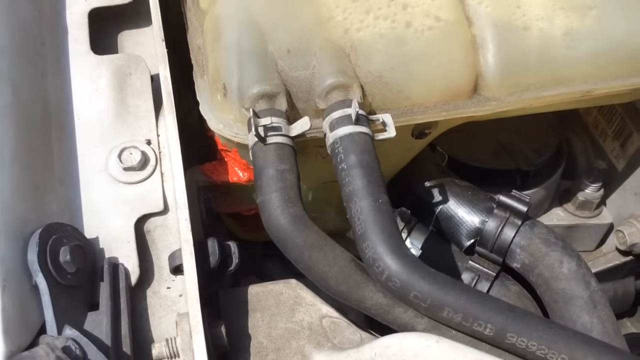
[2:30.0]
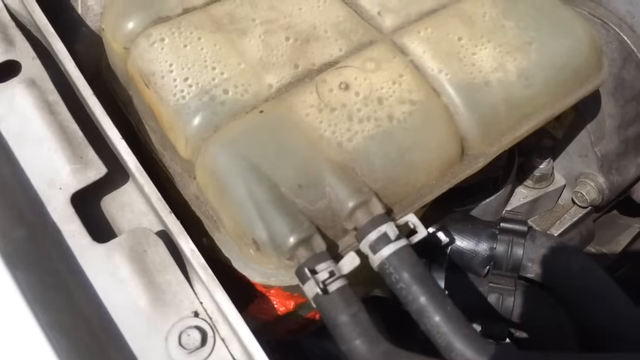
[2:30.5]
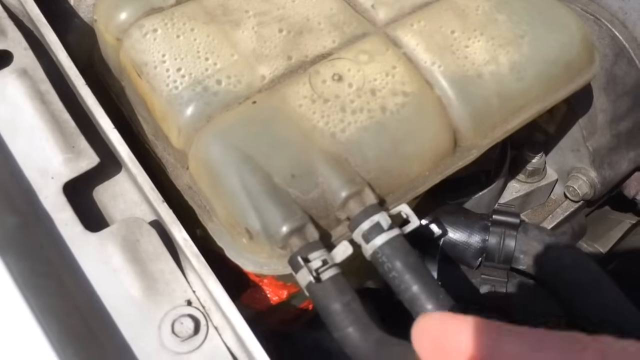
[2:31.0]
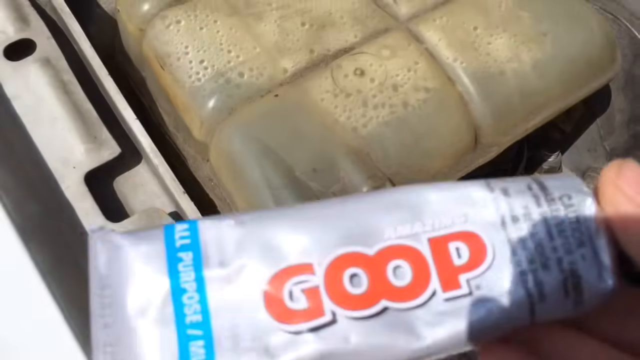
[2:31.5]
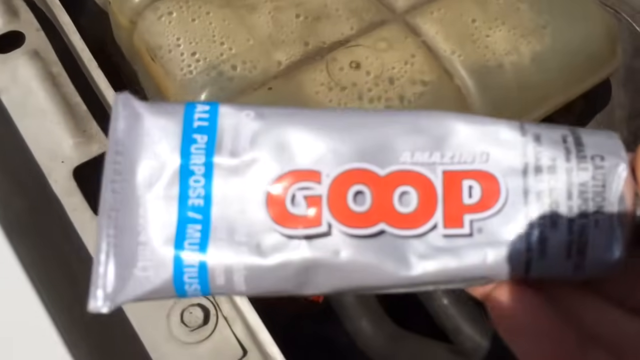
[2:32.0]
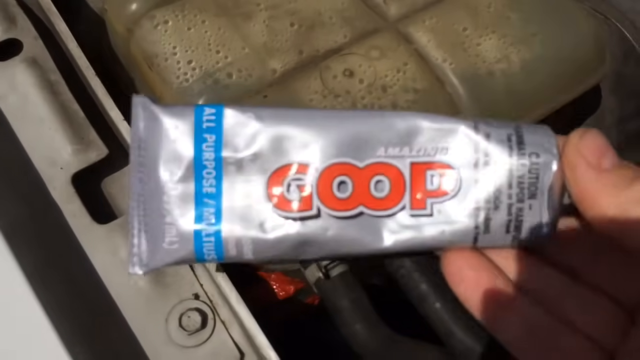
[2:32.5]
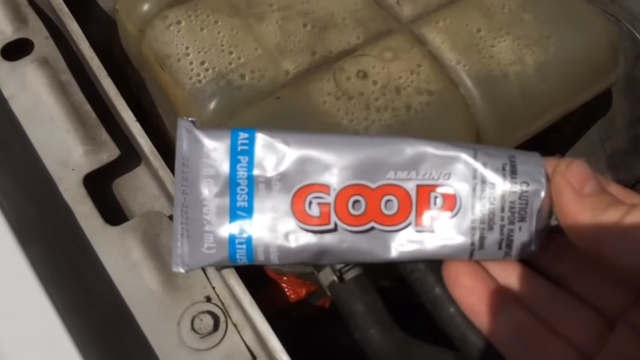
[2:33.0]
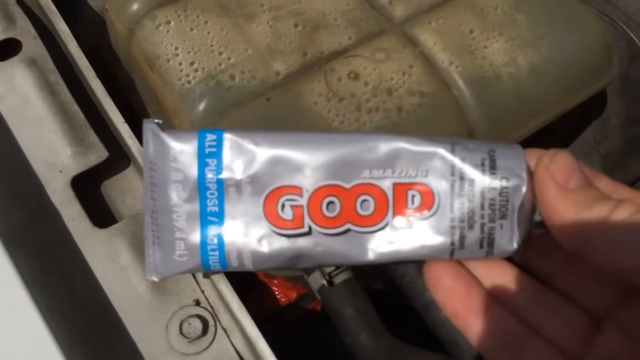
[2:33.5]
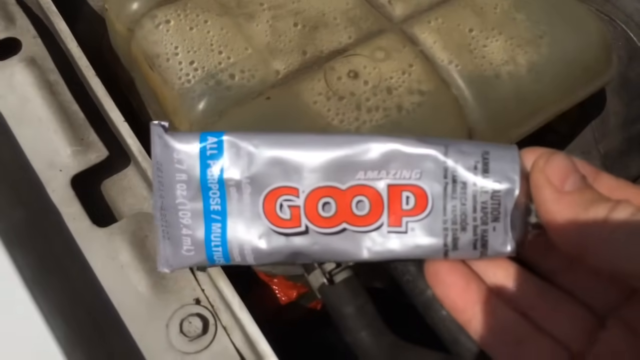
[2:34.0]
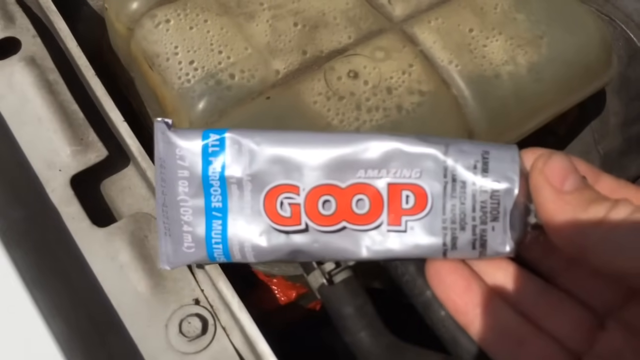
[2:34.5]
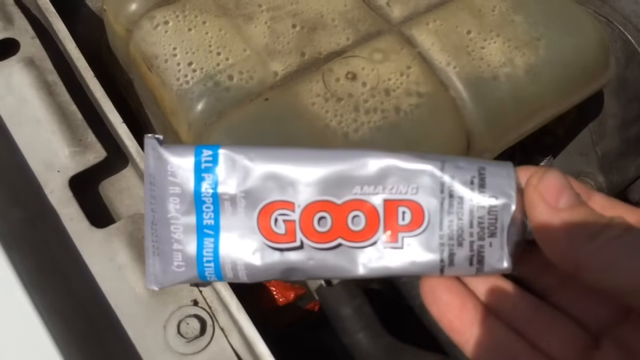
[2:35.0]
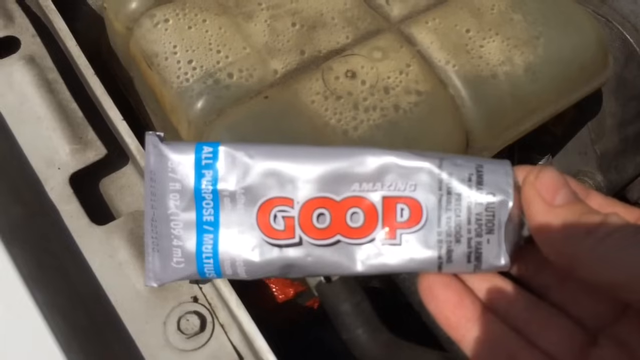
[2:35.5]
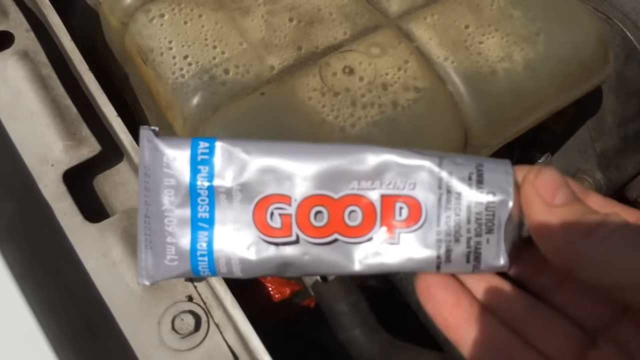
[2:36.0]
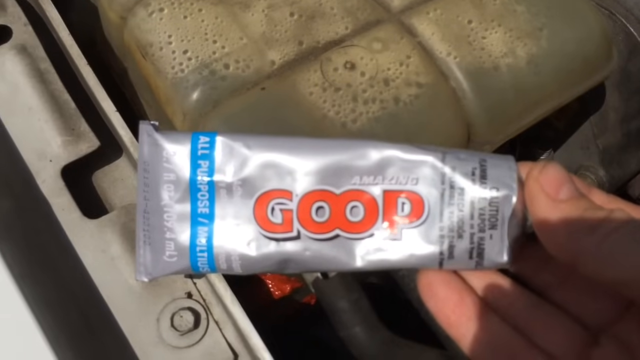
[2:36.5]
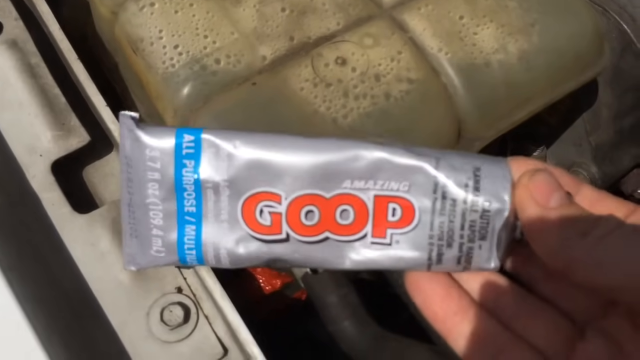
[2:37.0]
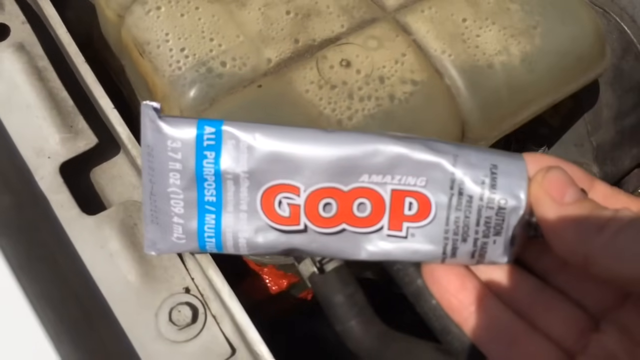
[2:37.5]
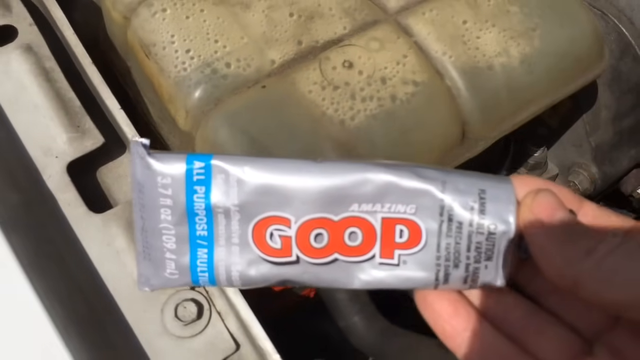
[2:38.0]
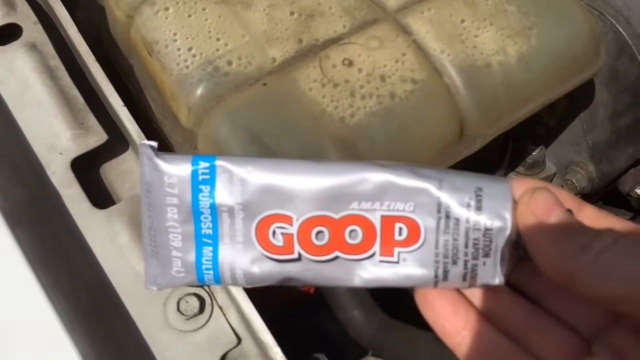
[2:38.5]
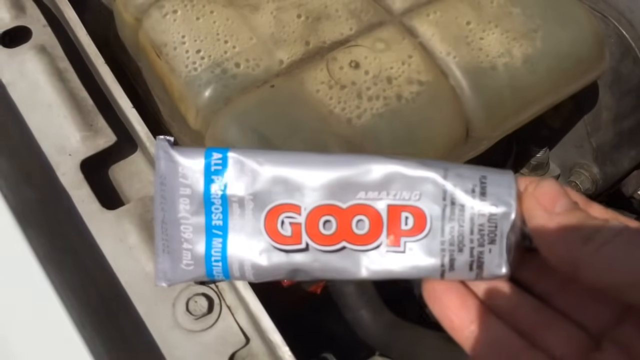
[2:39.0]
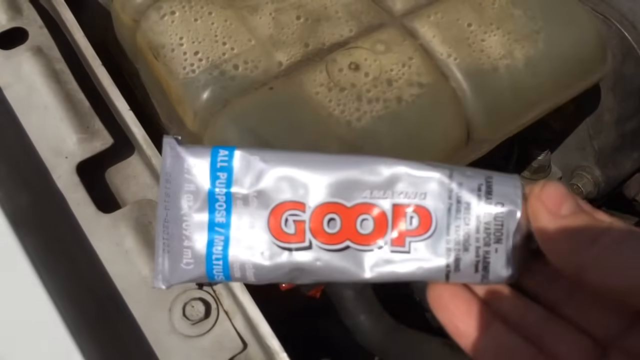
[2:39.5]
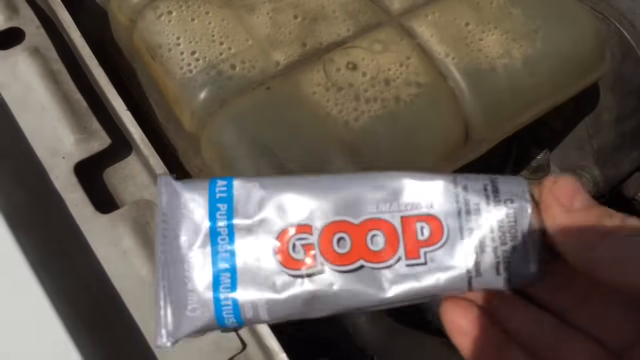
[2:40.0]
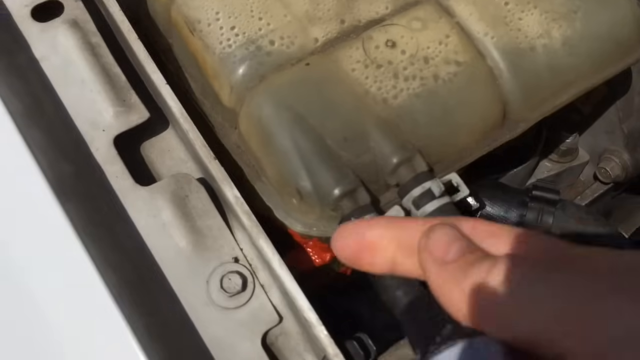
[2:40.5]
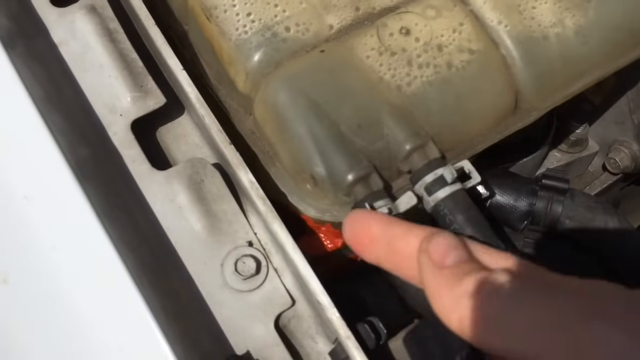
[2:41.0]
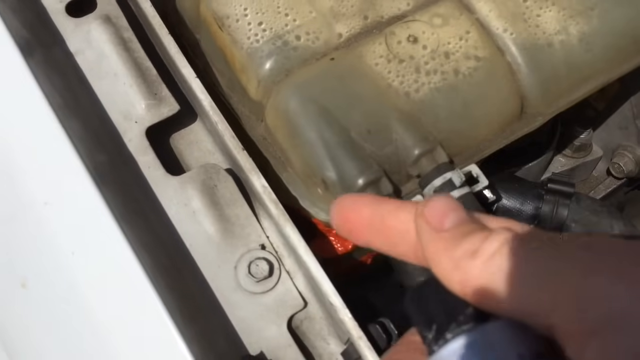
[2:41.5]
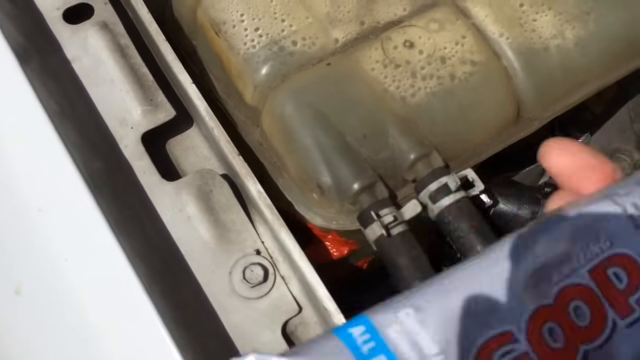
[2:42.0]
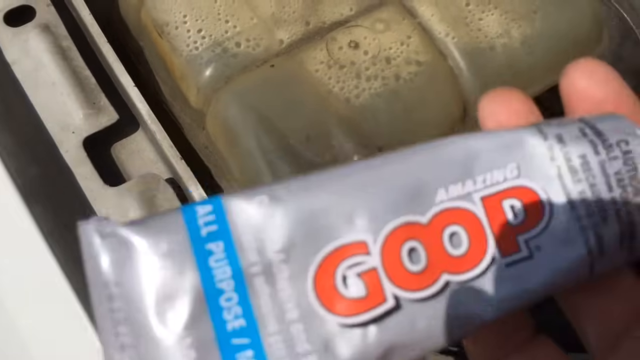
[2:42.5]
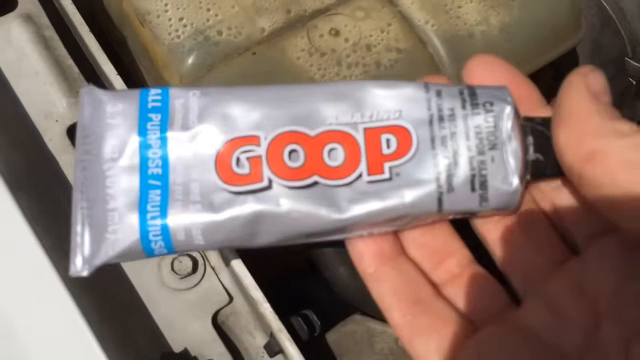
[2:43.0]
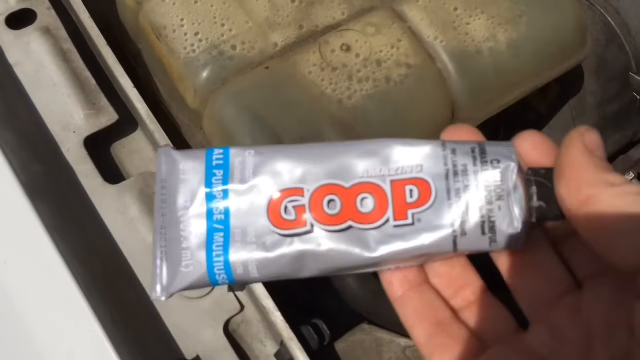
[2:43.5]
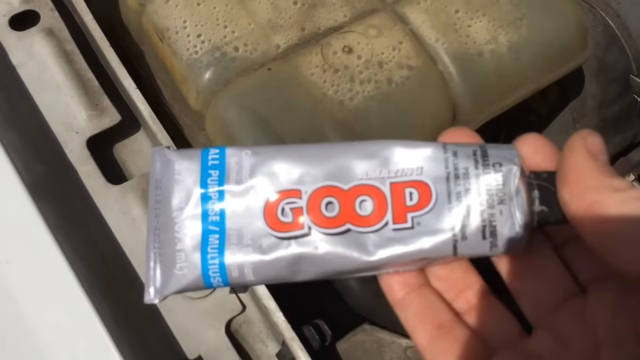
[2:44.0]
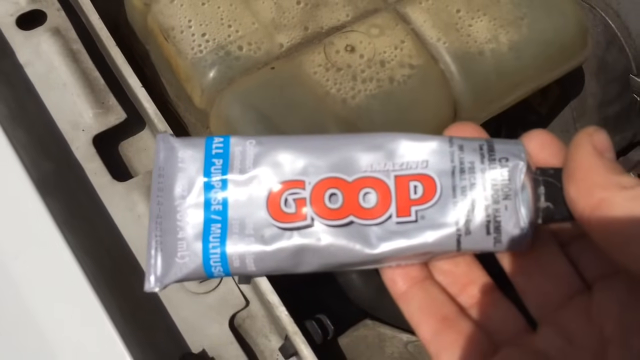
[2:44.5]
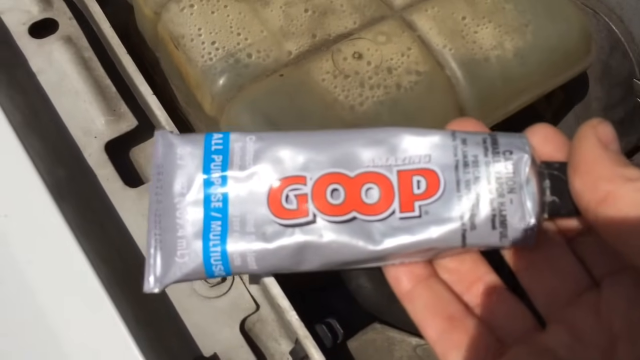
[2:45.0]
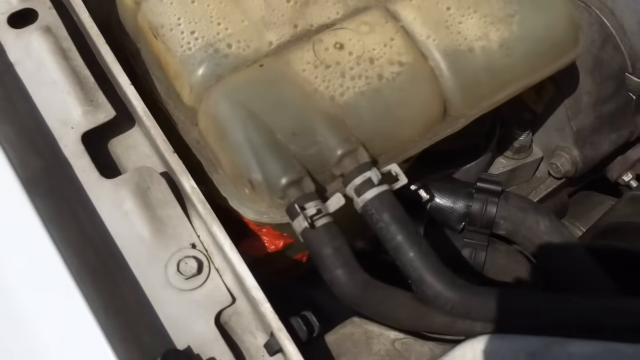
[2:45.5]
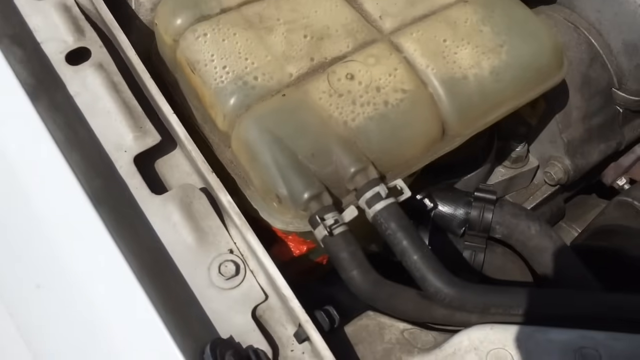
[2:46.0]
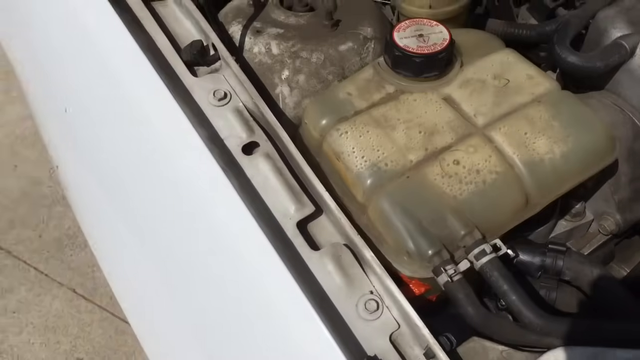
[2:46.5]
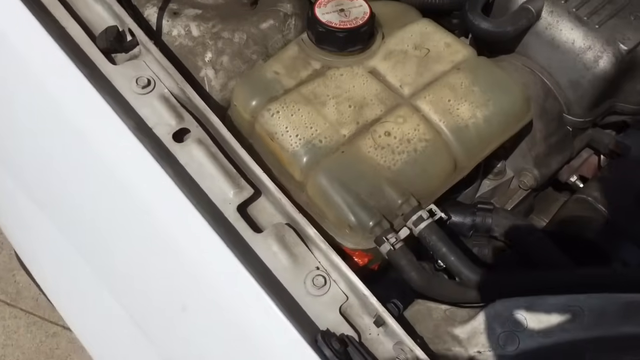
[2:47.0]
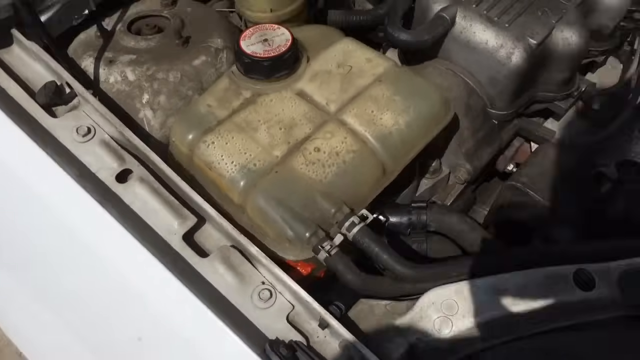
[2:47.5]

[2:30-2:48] An overhead view shows a vehicle's engine compartment, with the camera on a square coolant reservoir expansion tank. Its bottom left is connected by two rubber hoses that have been clamped. There is condensation on the top of the reservoir, and its bottom left portion is covered in an orangish-red bonding substance. A hand pulls a large silver tube into the camera's focus, holding it in front of the camera with the right hand. The silver tube has black caution warnings and the name "Amazing Goop", with "amazing" in white text and "goop" in larger orangish-red block letters. The person rotates the tube slightly downward and upward in front of the camera, then points with a finger at the reddish substance already applied to the reservoir tank. The camera then draws back from the tank so more of the engine components can be seen, revealing three rubber hoses coming out from the bottom of the reservoir tank.